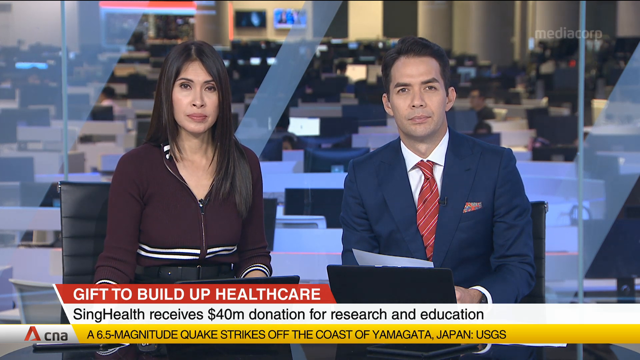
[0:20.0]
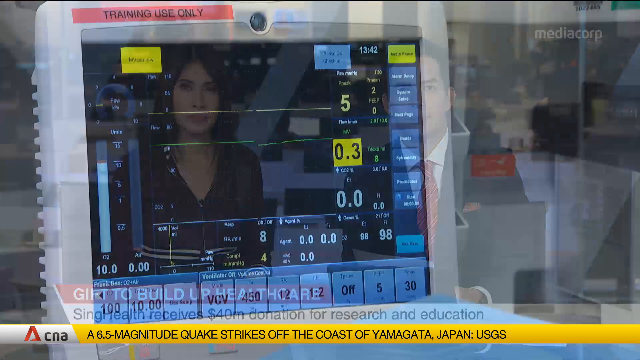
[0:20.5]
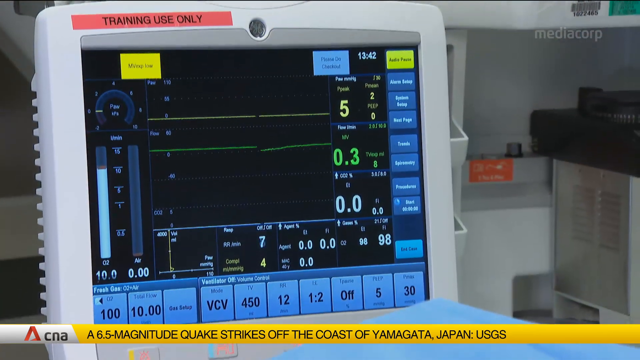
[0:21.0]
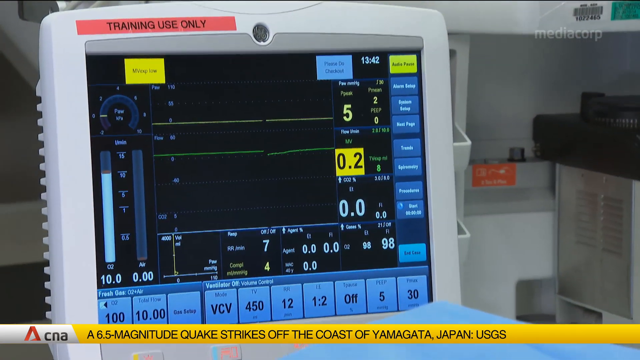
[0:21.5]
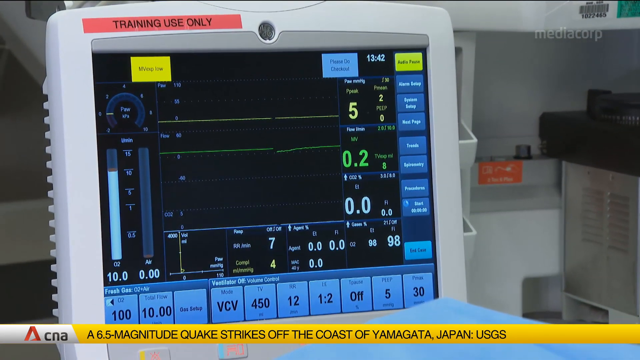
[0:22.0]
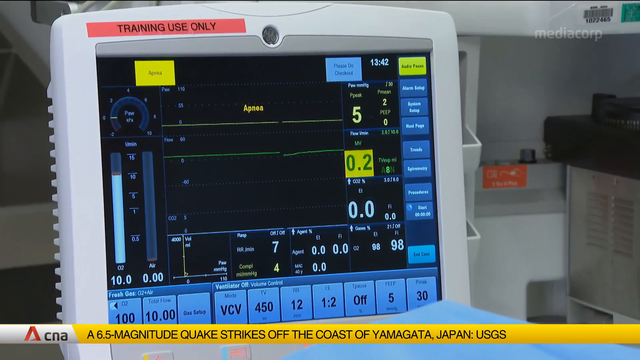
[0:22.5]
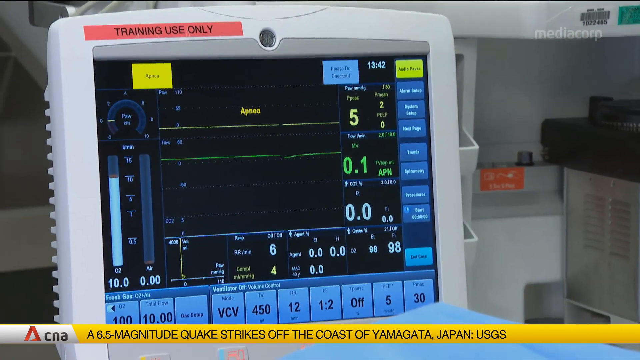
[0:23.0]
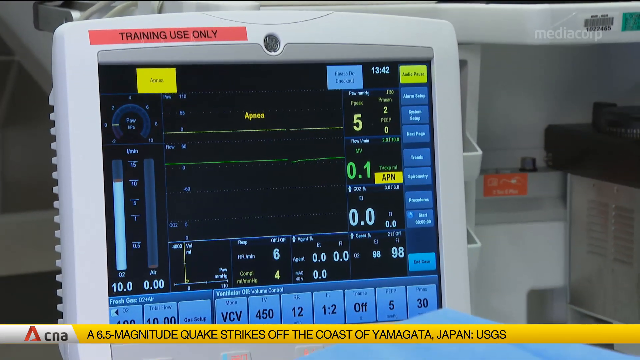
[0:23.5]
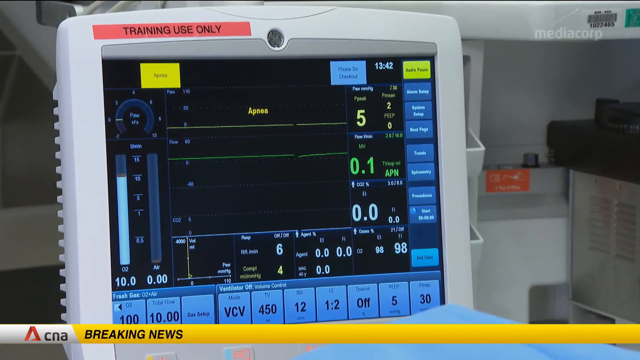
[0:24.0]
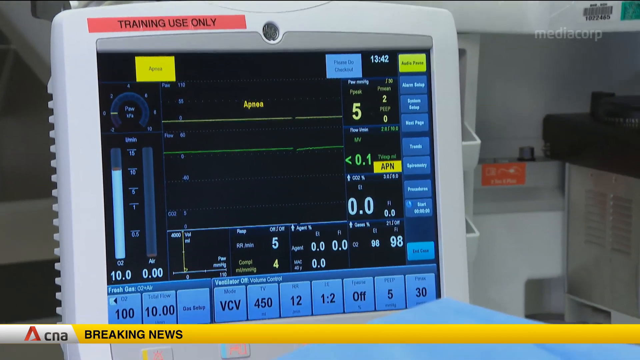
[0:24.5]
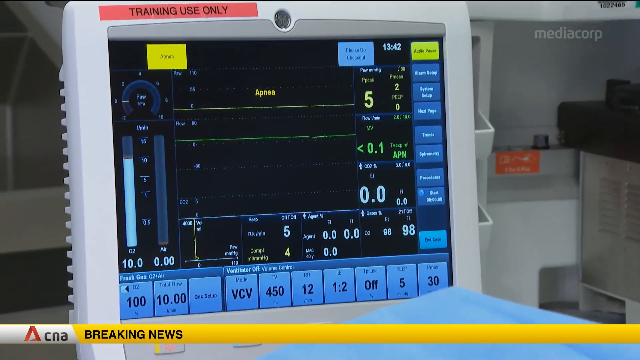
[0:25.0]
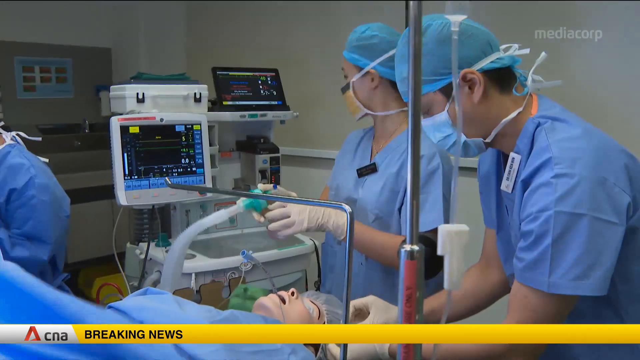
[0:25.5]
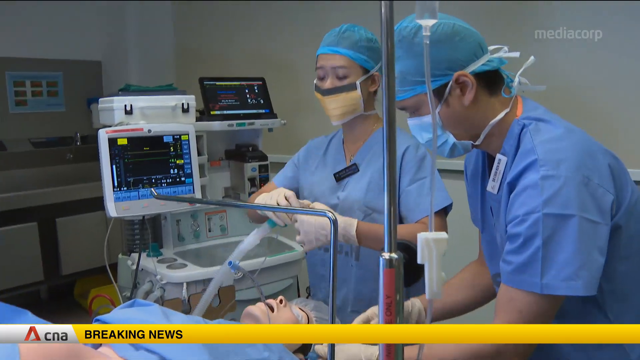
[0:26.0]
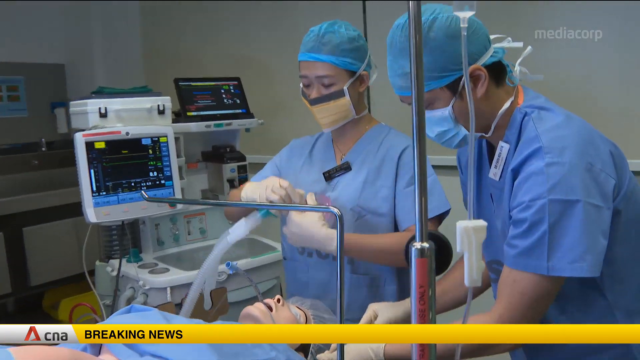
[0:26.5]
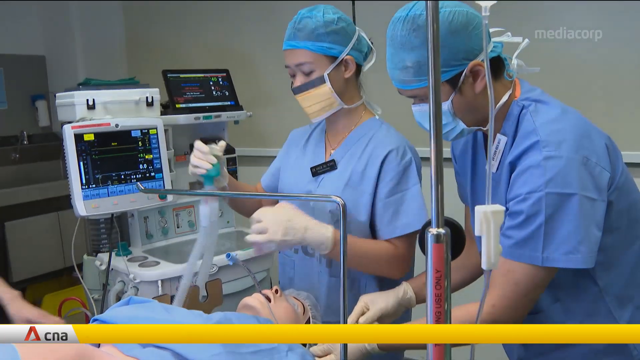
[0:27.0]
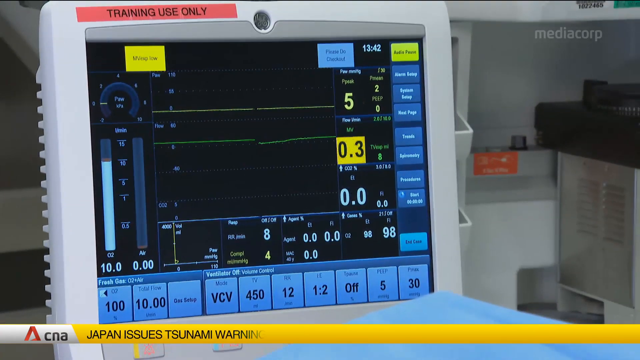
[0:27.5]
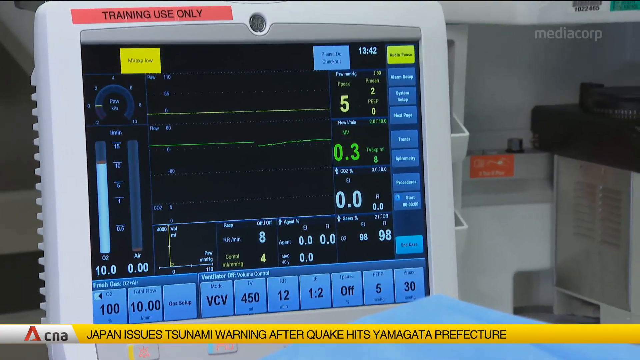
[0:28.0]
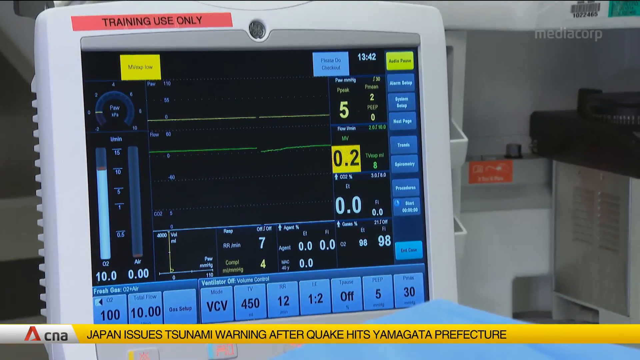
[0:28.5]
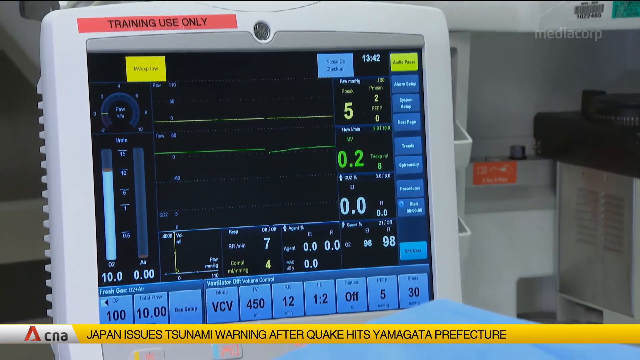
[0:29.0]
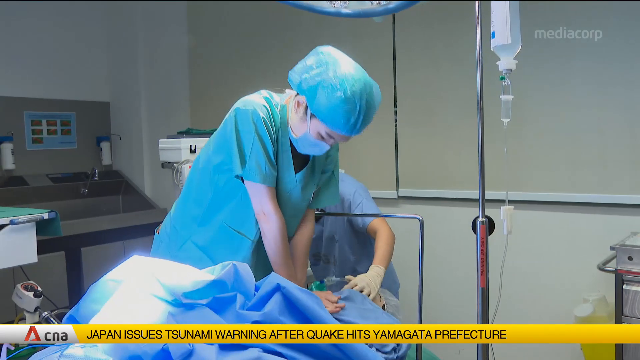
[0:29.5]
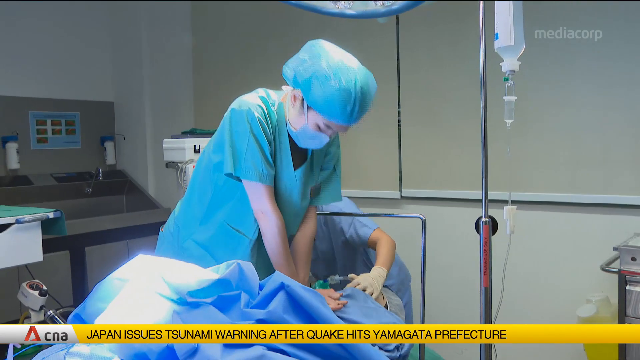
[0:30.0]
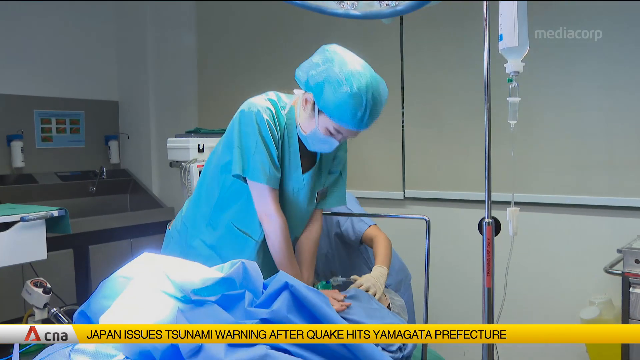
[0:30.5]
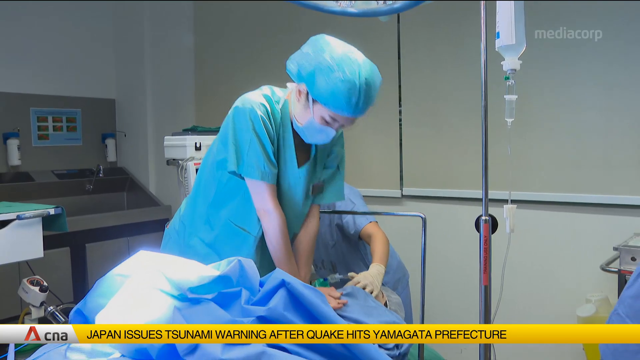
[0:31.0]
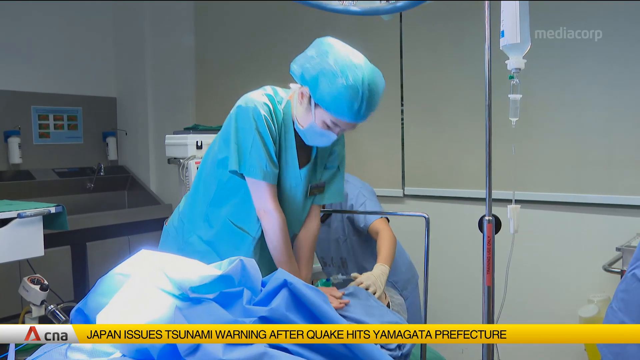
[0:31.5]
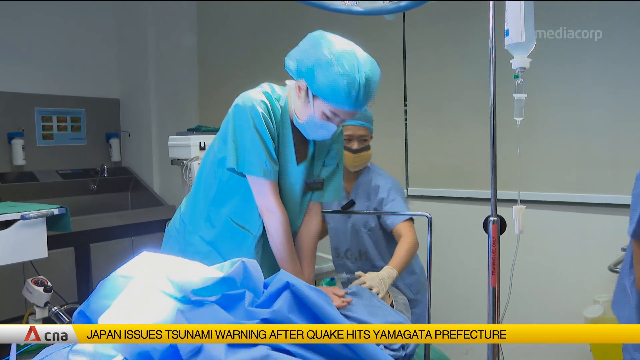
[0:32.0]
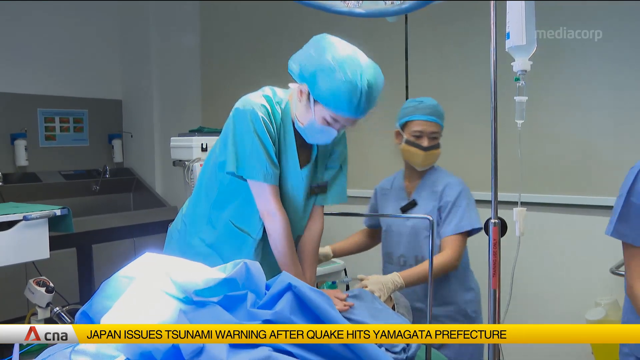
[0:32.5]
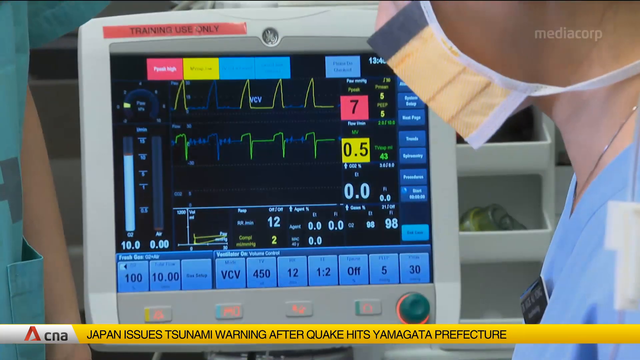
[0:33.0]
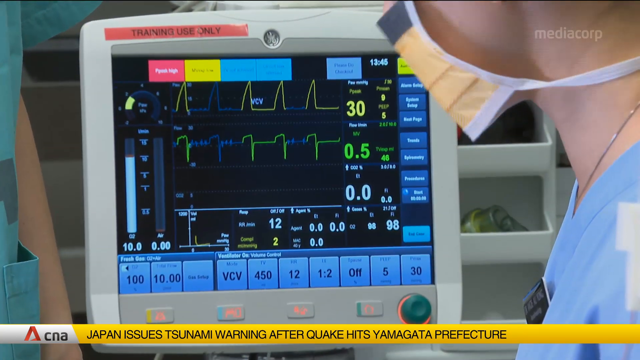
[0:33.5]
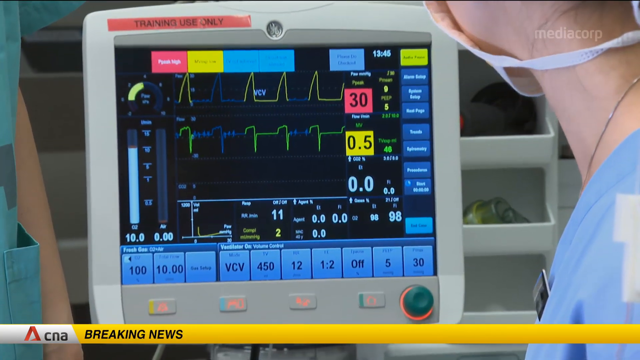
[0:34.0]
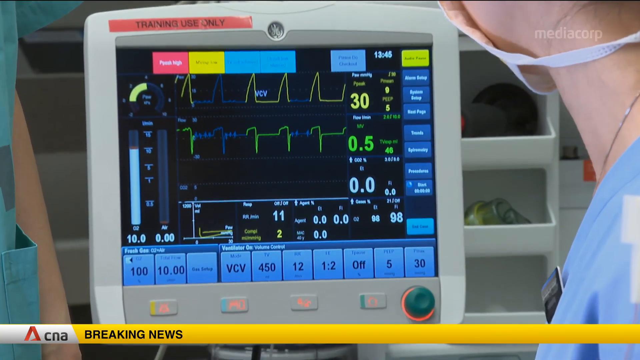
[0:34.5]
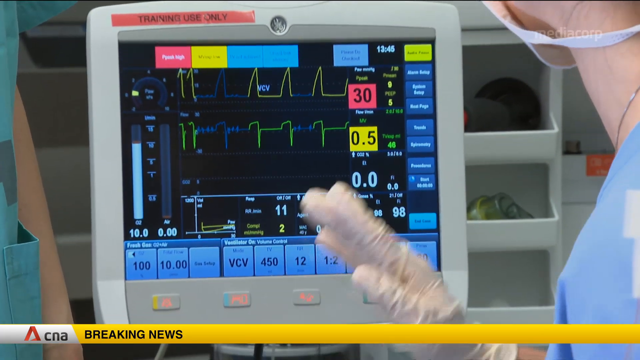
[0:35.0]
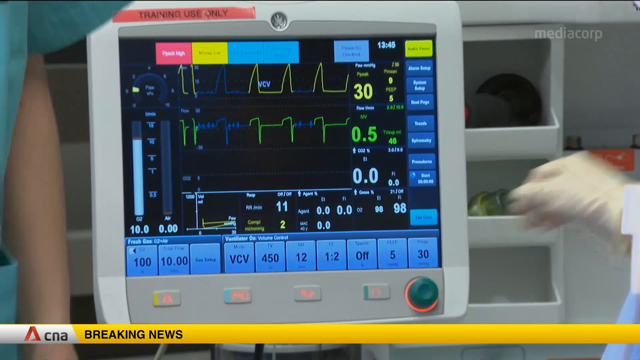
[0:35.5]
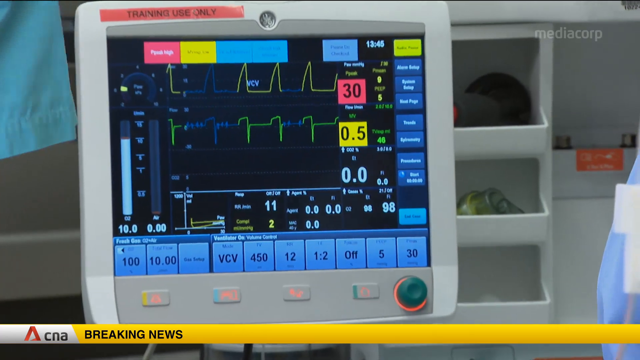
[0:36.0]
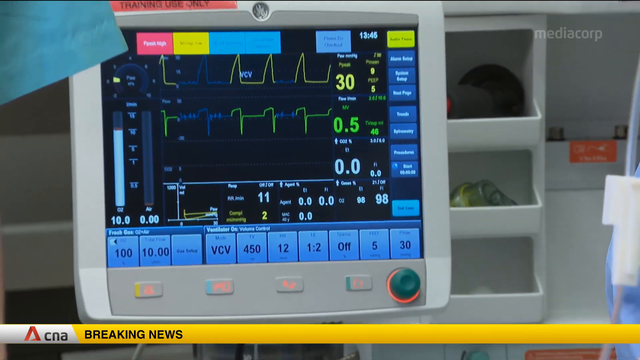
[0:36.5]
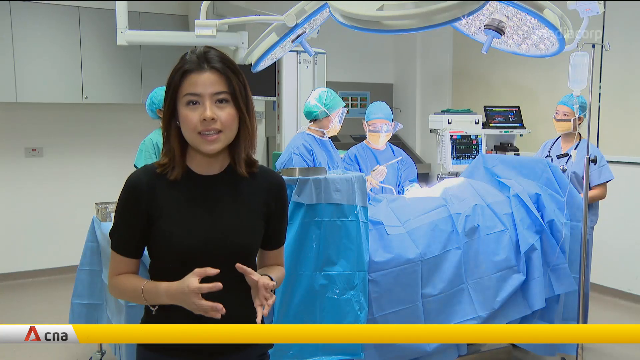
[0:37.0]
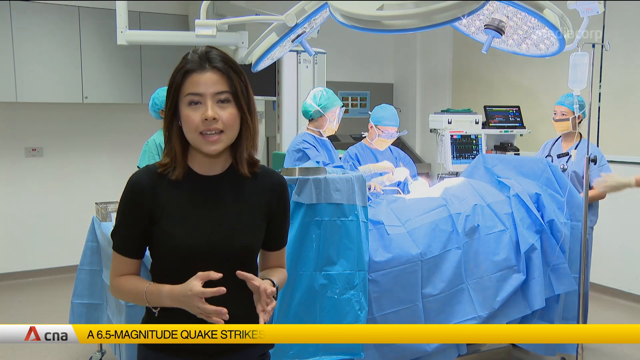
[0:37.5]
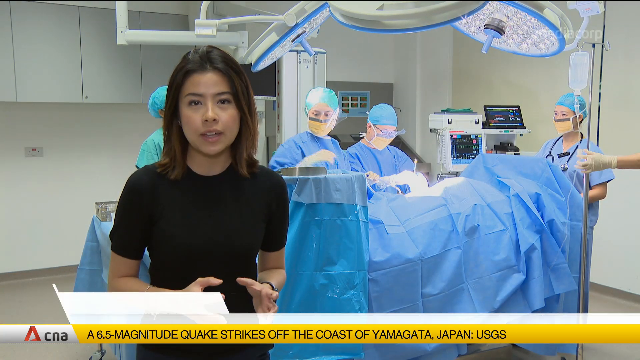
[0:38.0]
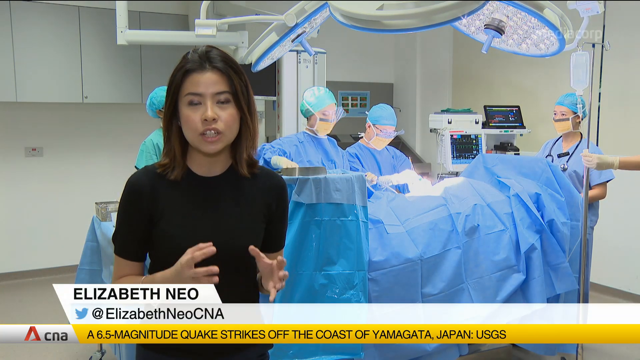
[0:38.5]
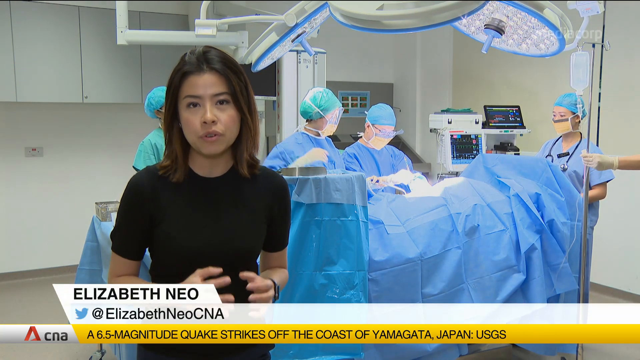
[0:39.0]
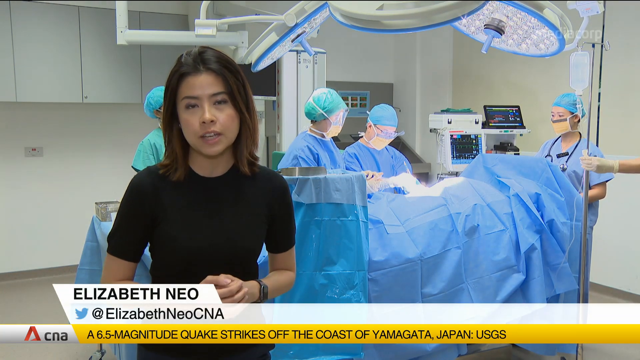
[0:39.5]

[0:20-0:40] The broadcast continues with two anchors, left and right, sitting in front of a brown table. The woman on the left wears a long-sleeved purple zip-up shirt with horizontal white stripes and has long brown hair down to about her chest. The man on the right wears a dark blue suit with a light and dark striped tie. A red banner runs left to right along the bottom, reading "gift to build up health care" in white capital letters, with a second, white banner below it reading "SingHealth receives 40 million donation for research and education." The video then goes to a zoomed-in view of a health monitor, like one at a hospital, monitoring different vitals; it seems to show a flat line. It then goes to a zoomed-out view of a bunch of doctors and nurses working on a patient, likely the one needing help, and they are apparently doing chest compressions on them.